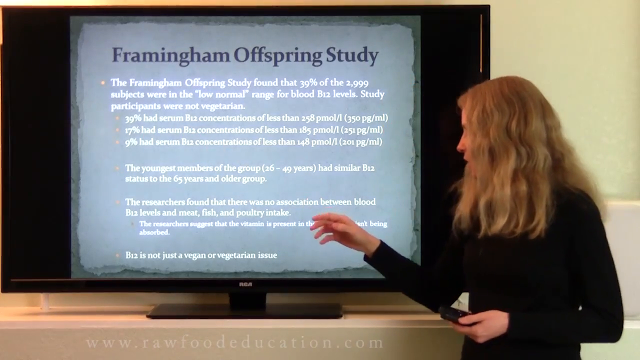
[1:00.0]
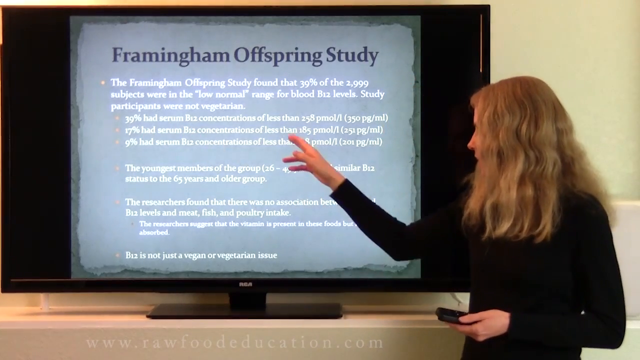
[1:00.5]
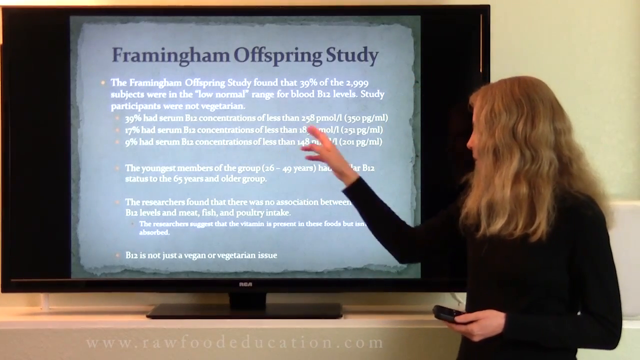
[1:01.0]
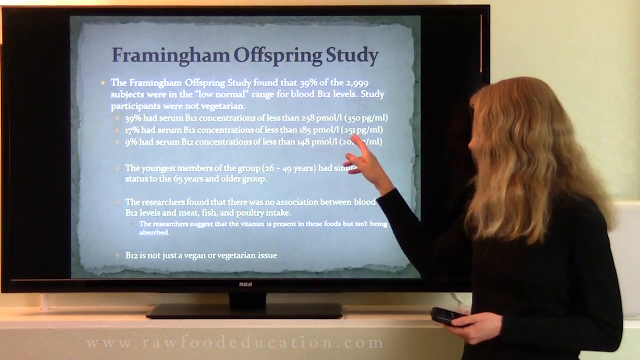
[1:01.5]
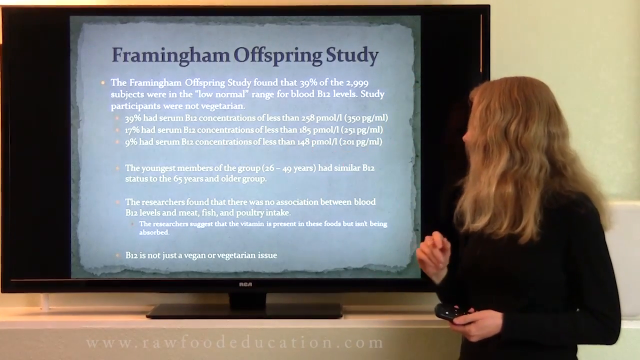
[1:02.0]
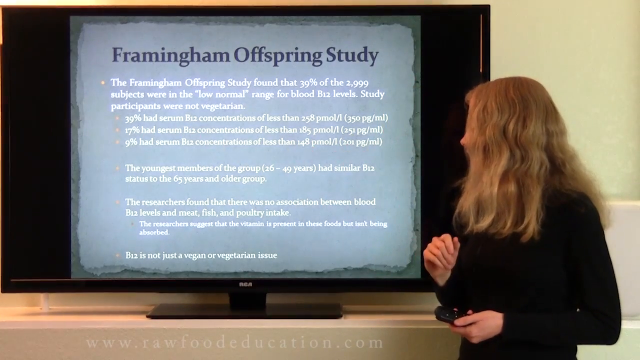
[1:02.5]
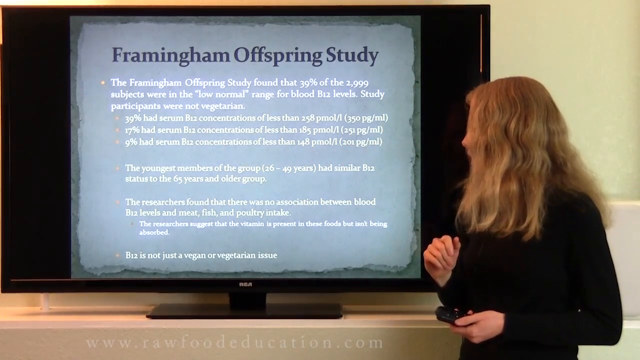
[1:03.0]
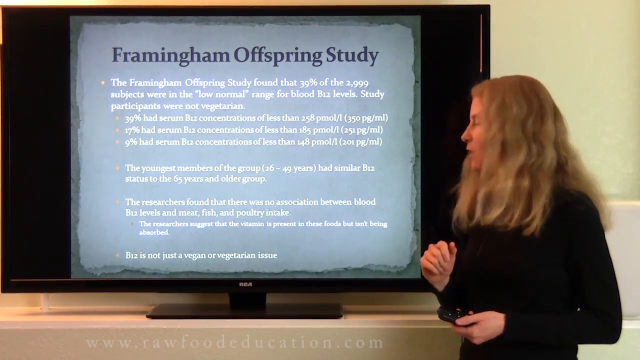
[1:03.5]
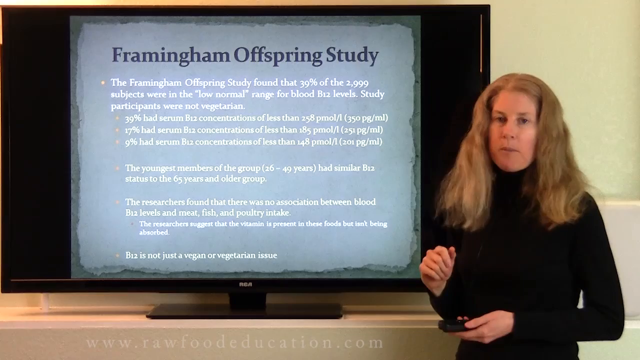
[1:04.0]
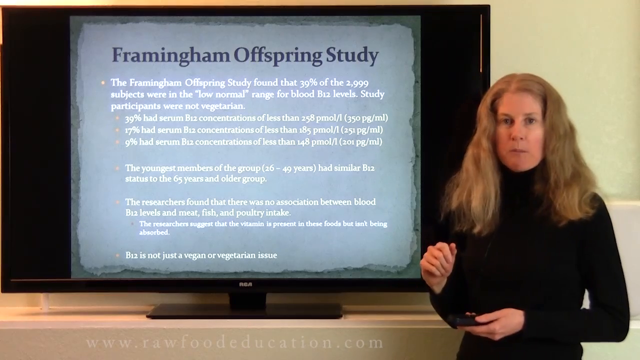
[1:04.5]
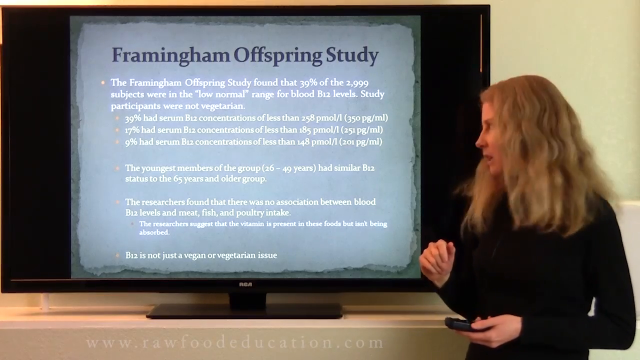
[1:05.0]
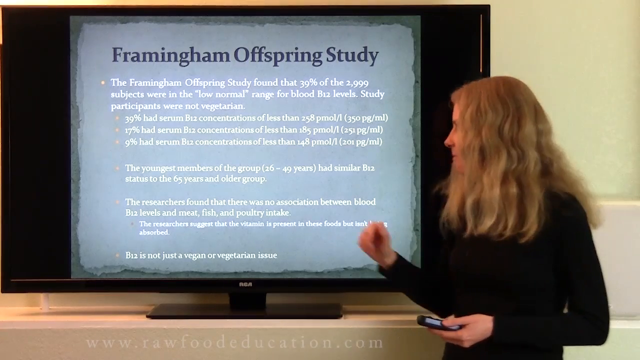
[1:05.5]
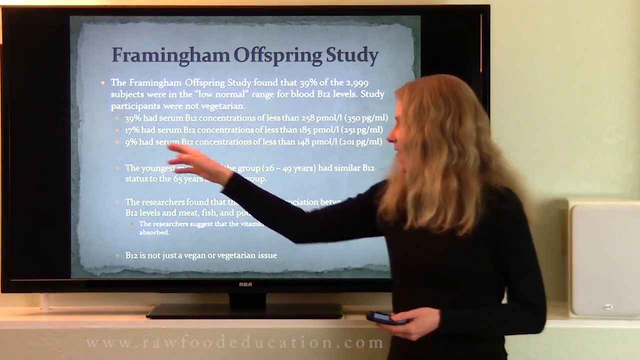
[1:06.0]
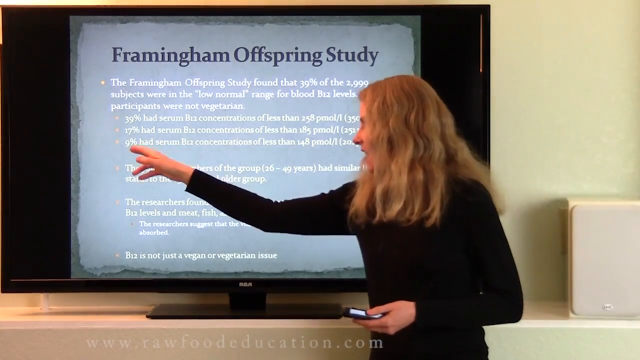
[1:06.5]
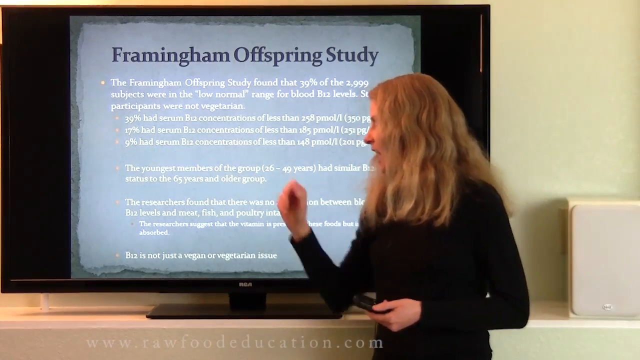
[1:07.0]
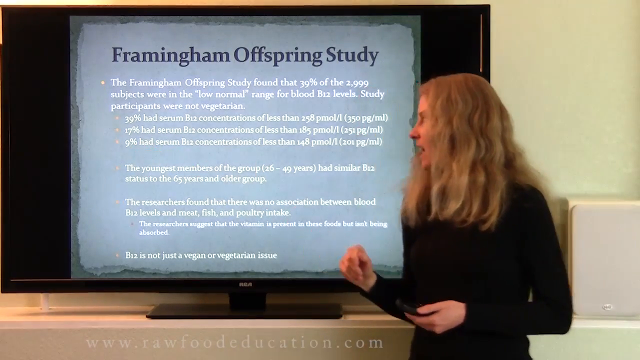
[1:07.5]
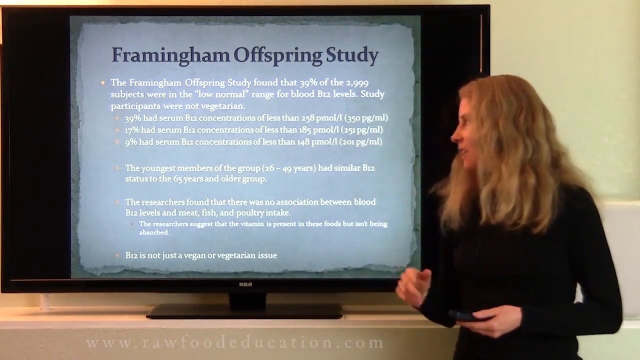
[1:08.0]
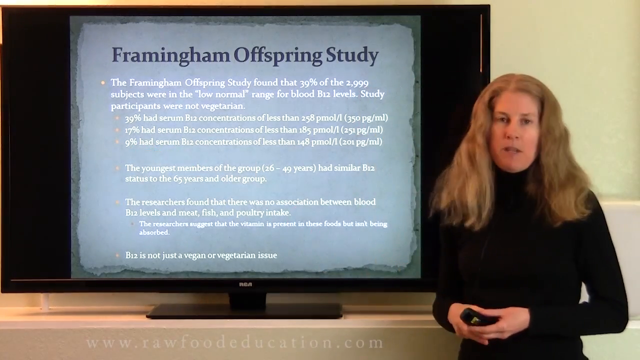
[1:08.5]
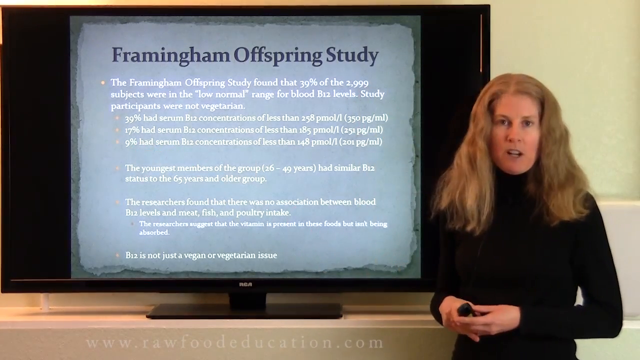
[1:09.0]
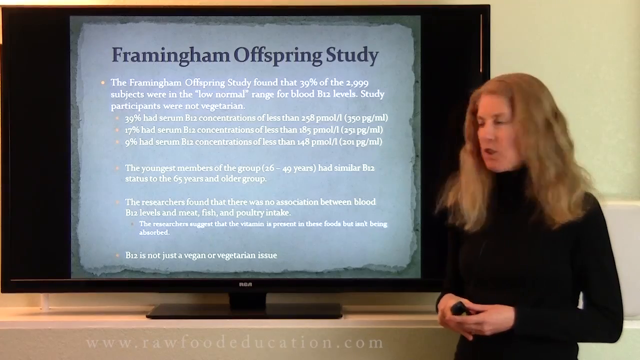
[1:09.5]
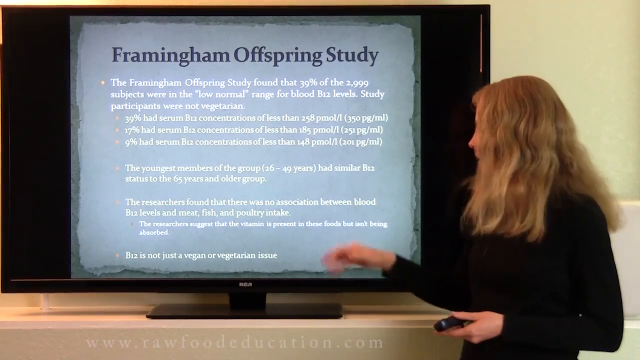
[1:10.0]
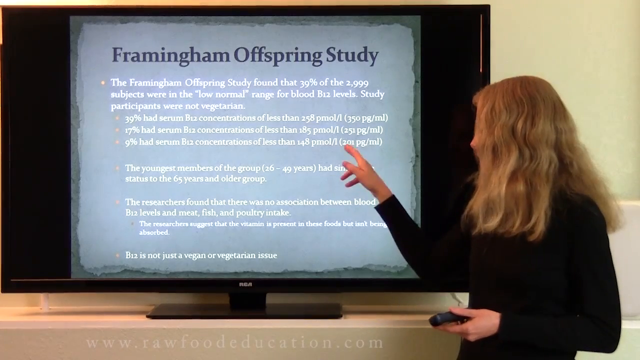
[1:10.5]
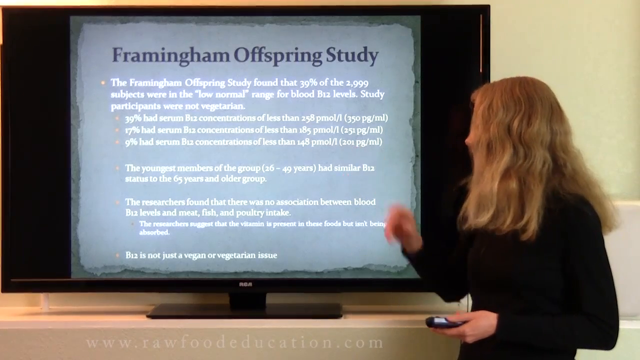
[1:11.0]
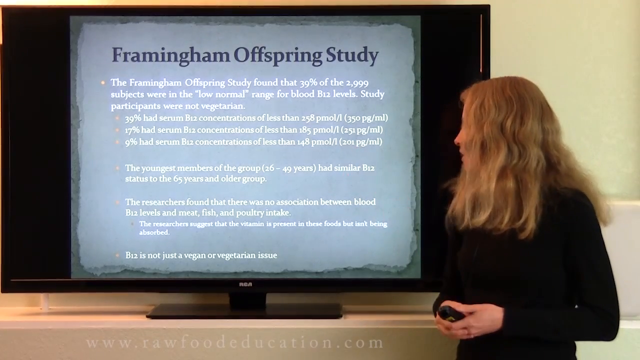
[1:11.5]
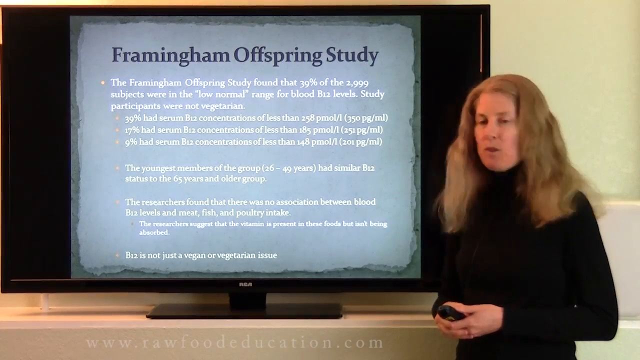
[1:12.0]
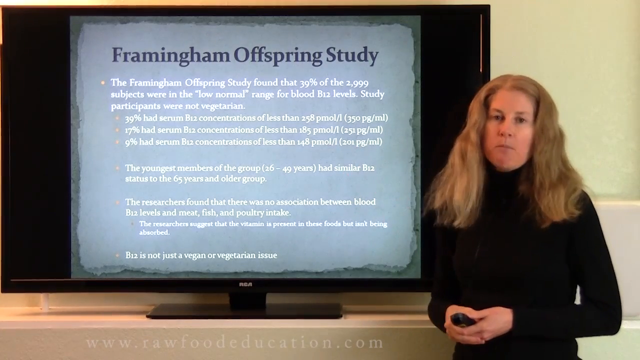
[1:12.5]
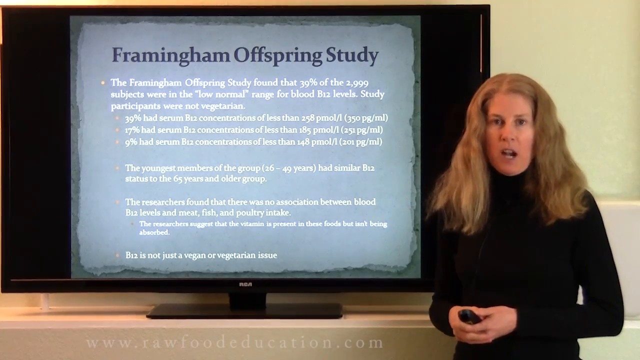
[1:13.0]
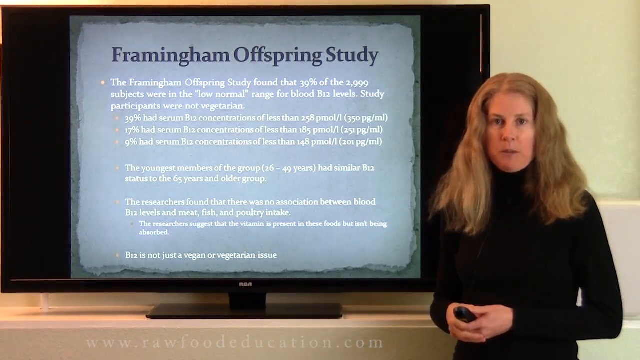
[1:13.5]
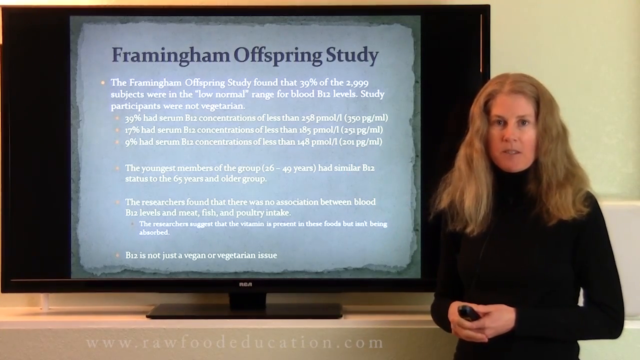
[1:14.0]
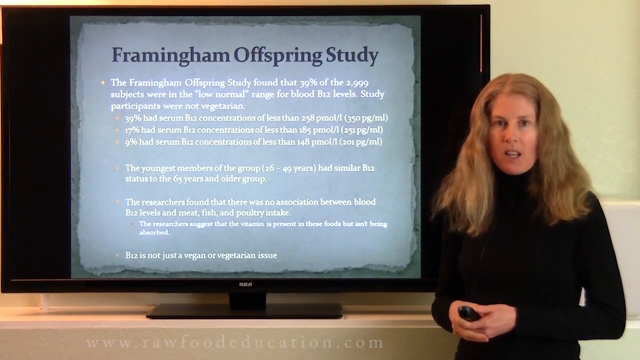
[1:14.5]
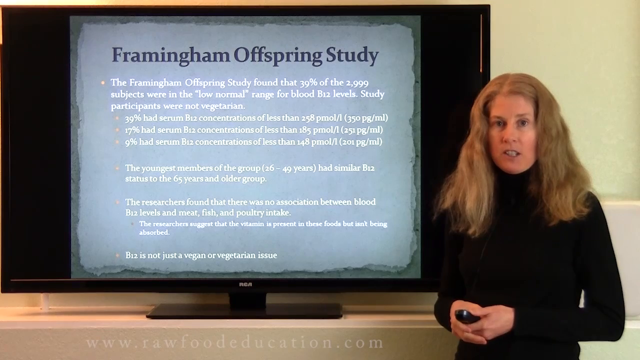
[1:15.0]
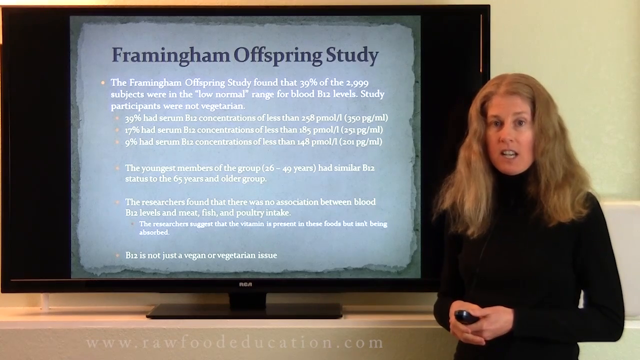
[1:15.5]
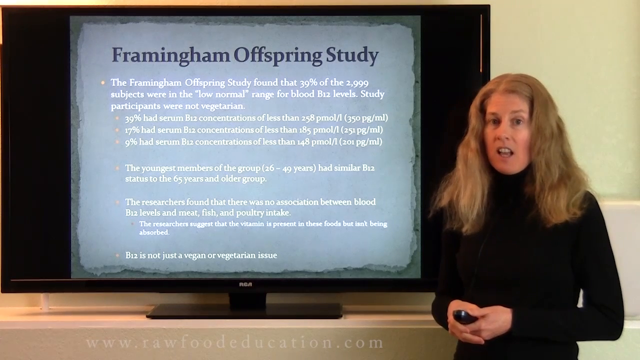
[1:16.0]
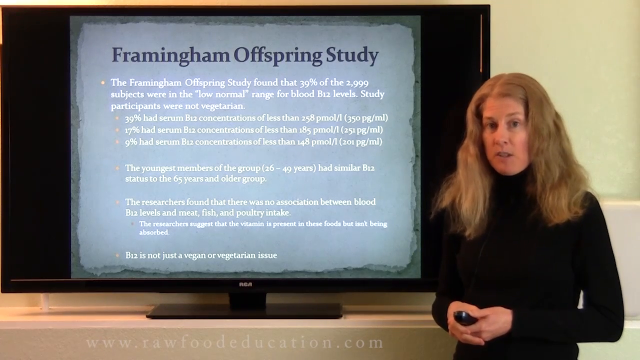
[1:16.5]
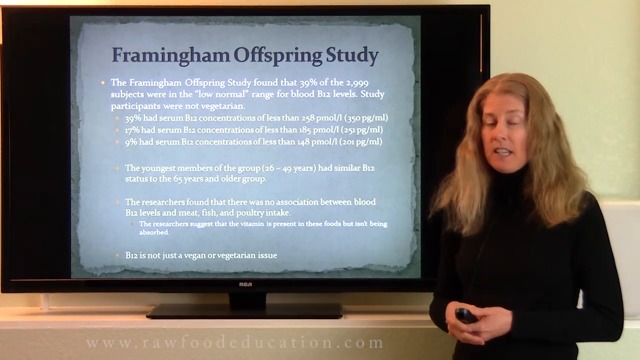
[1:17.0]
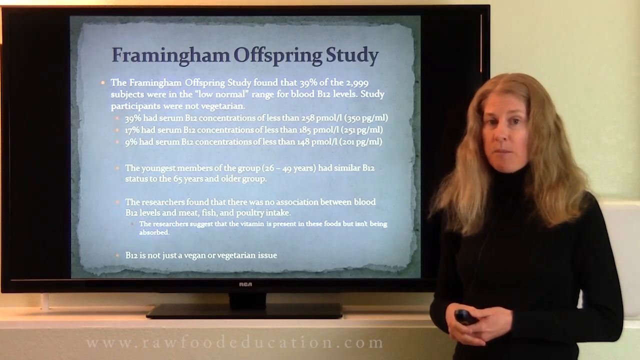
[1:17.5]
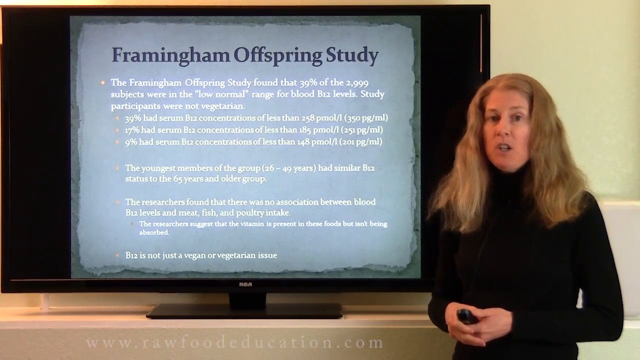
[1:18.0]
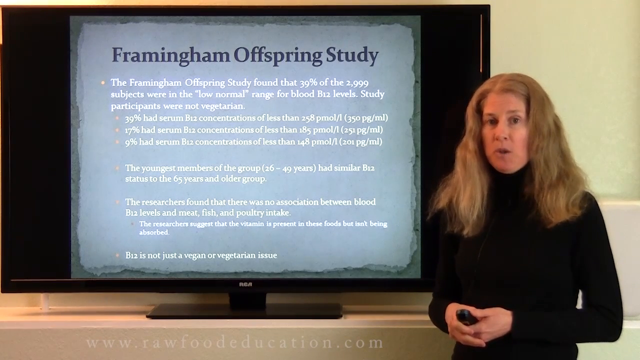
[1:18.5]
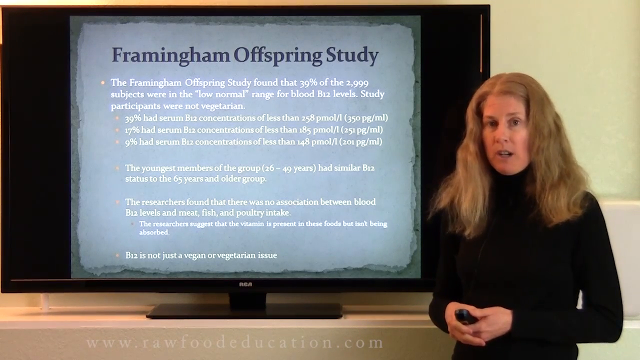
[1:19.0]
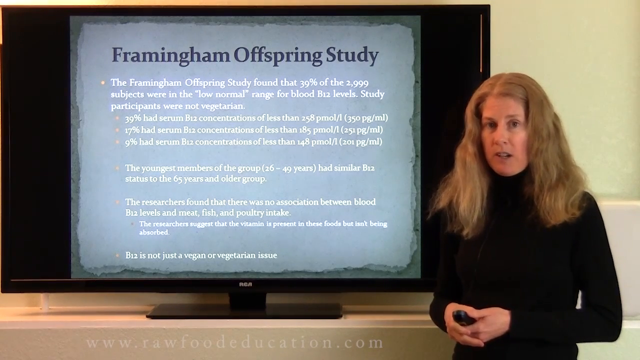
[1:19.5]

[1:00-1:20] The woman, with dirty blonde hair, probably around 40, in a black sweater, stands before a large monitor behind her showing information about the Framingham Offspring Study, and she points at different parts of the white text on it. There are no cuts, and the setting stays in the same room with a kind of beige wall and the monitor. No other people or animals appear.